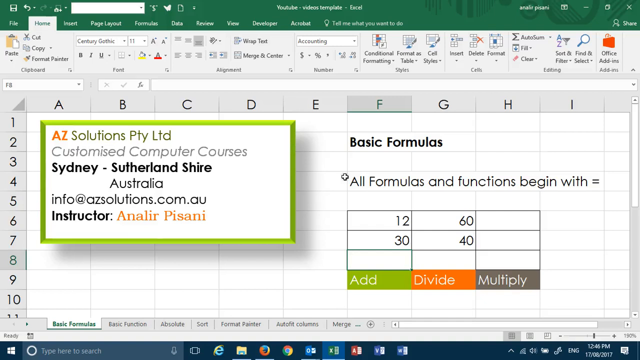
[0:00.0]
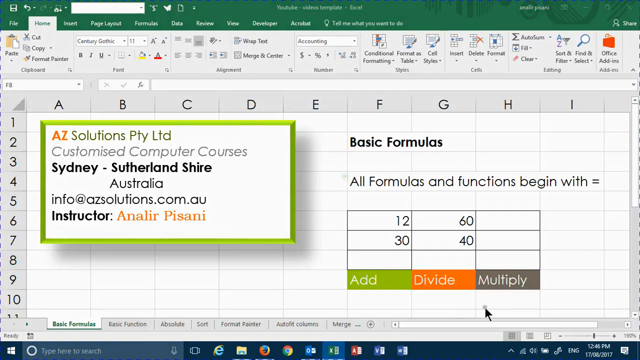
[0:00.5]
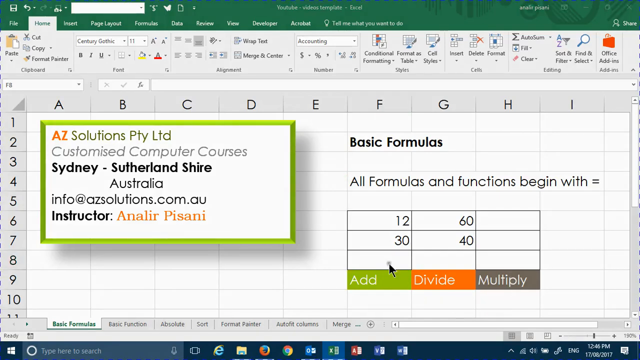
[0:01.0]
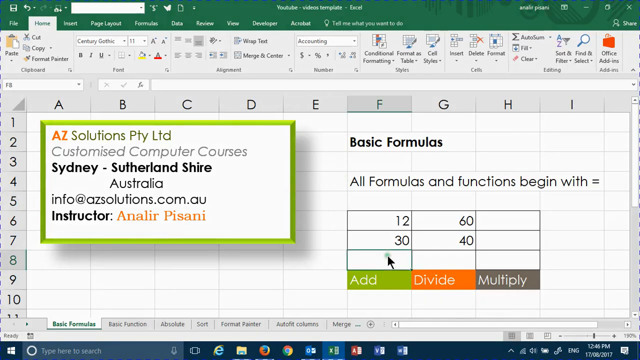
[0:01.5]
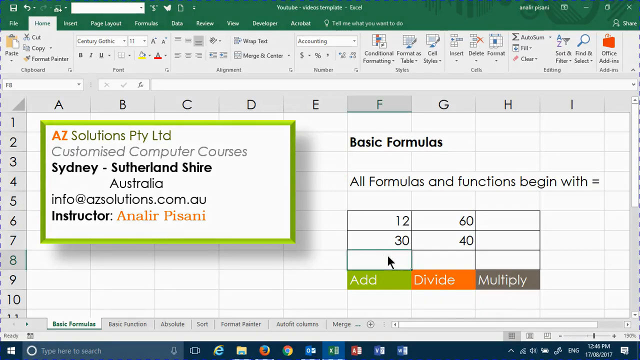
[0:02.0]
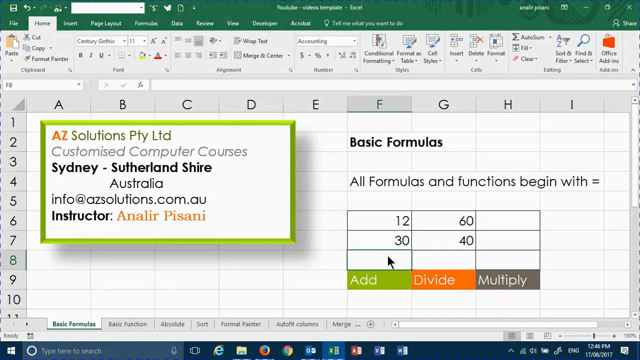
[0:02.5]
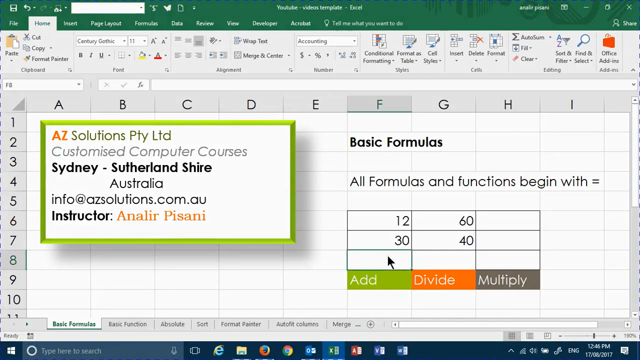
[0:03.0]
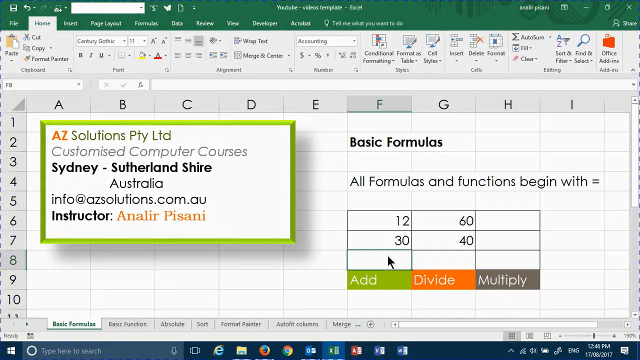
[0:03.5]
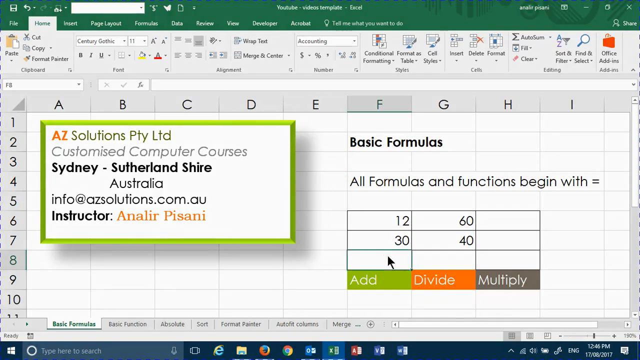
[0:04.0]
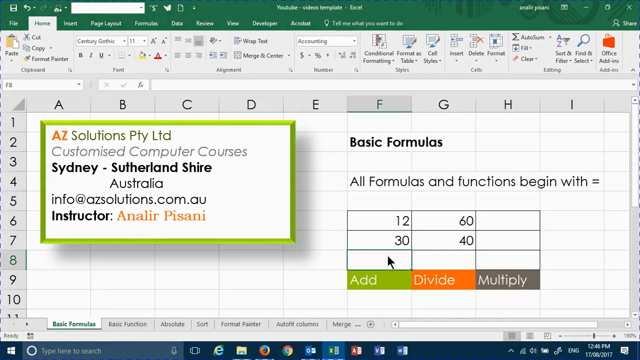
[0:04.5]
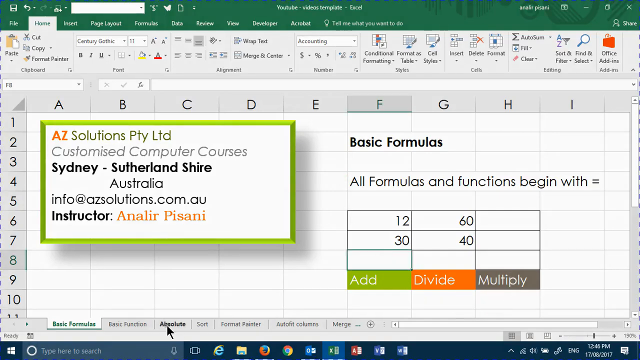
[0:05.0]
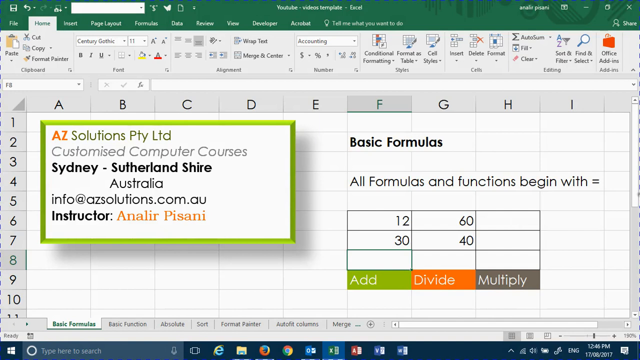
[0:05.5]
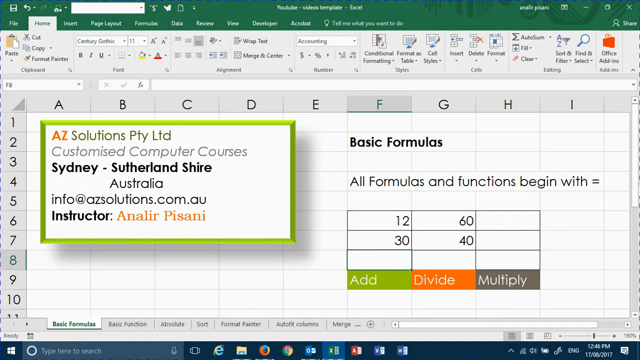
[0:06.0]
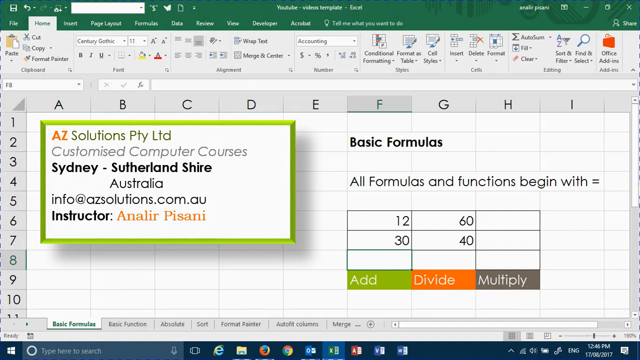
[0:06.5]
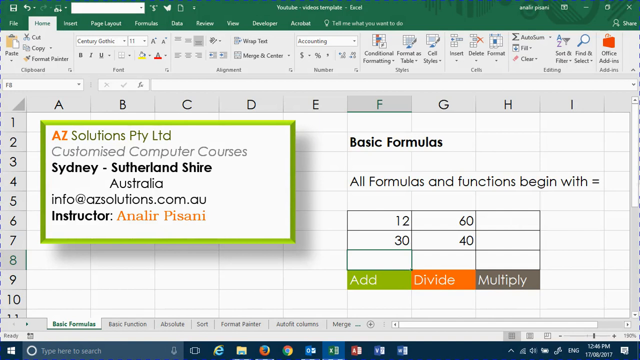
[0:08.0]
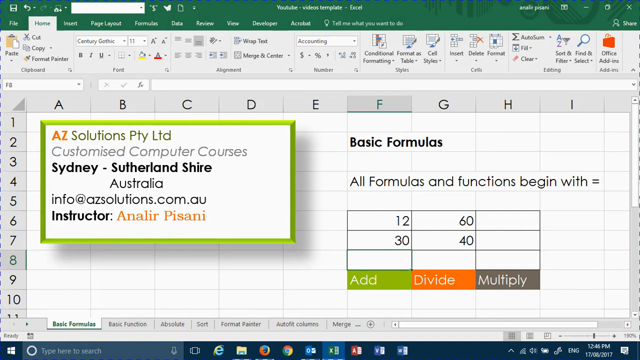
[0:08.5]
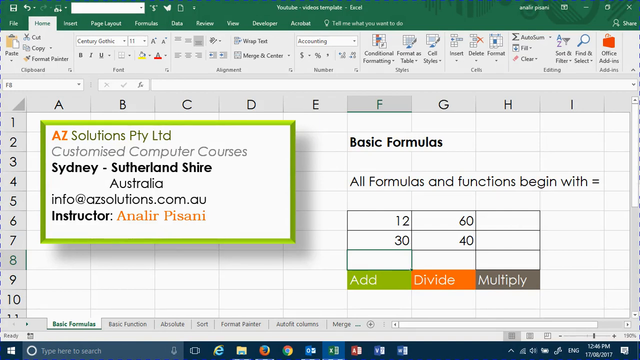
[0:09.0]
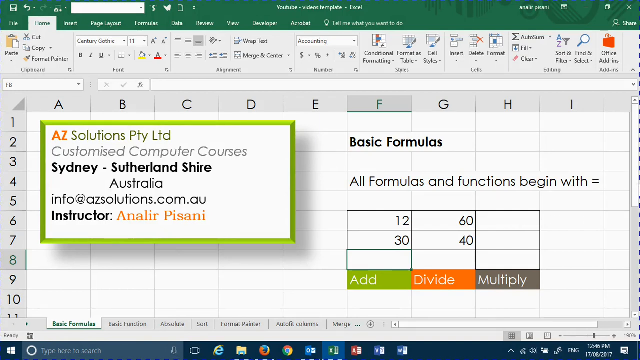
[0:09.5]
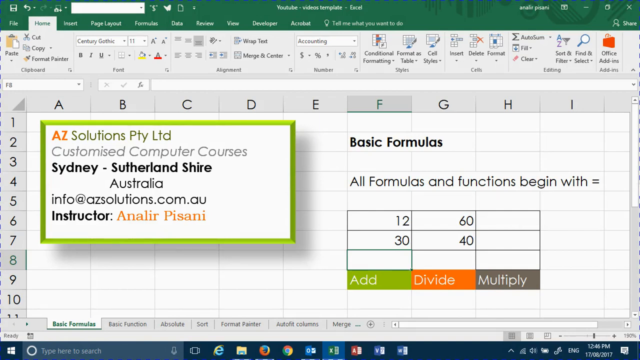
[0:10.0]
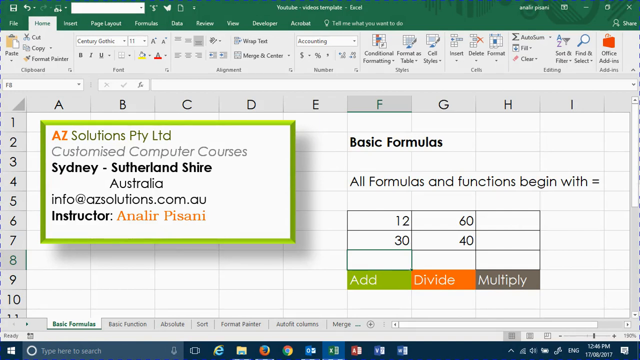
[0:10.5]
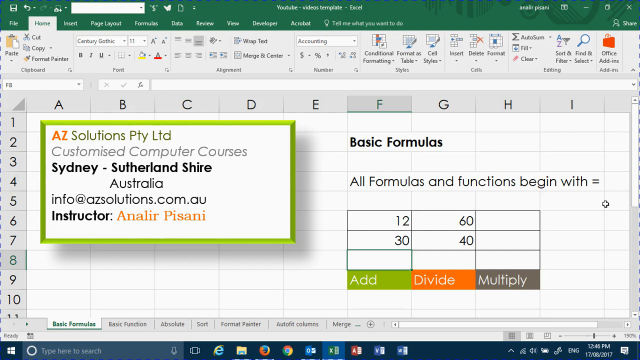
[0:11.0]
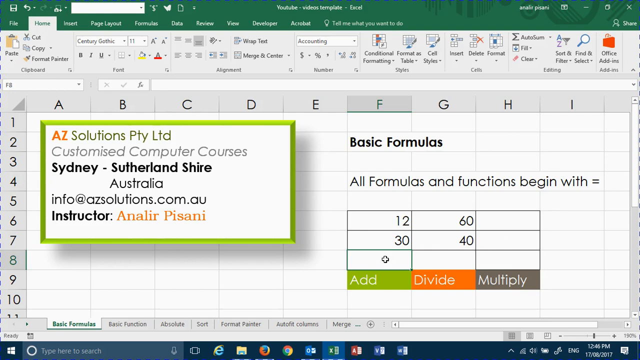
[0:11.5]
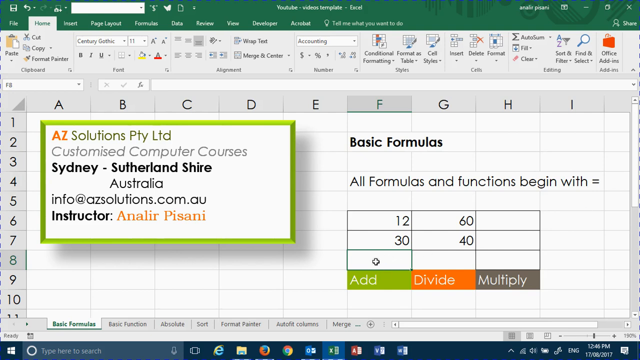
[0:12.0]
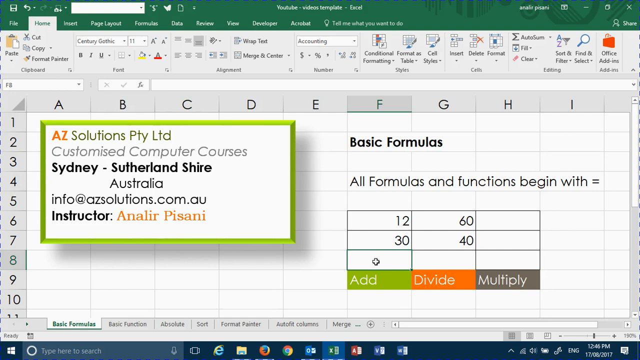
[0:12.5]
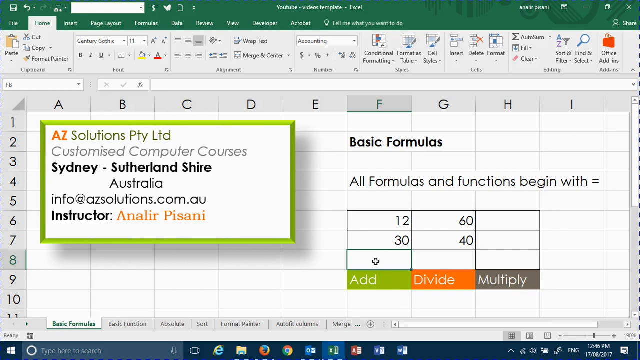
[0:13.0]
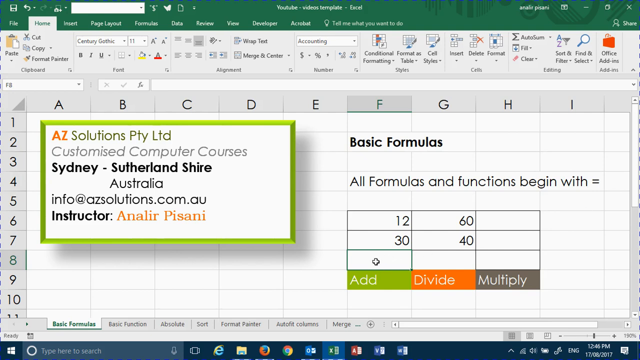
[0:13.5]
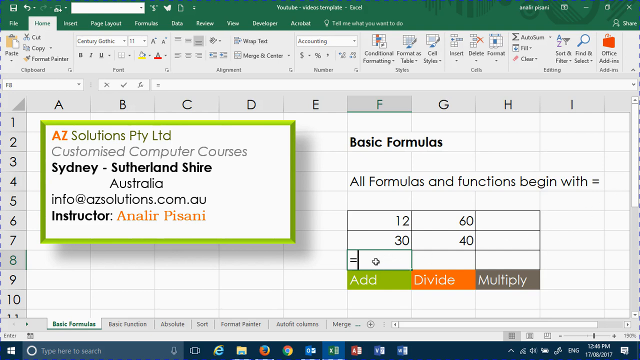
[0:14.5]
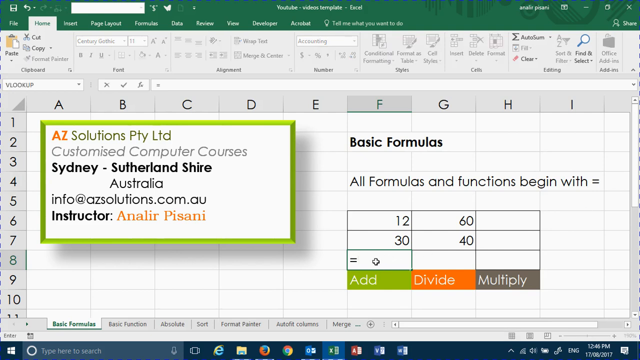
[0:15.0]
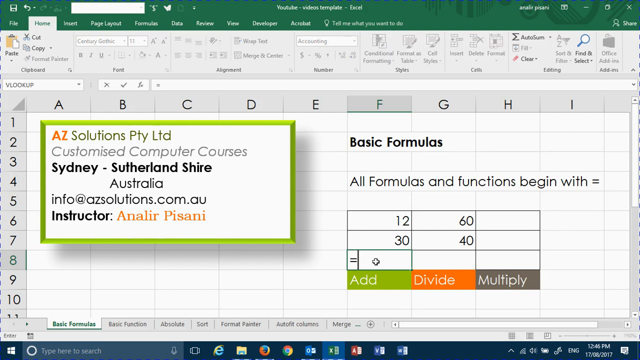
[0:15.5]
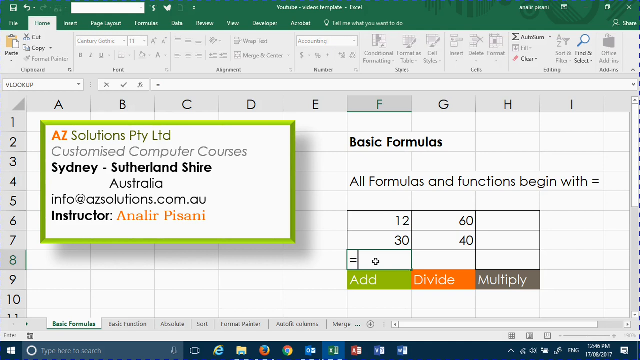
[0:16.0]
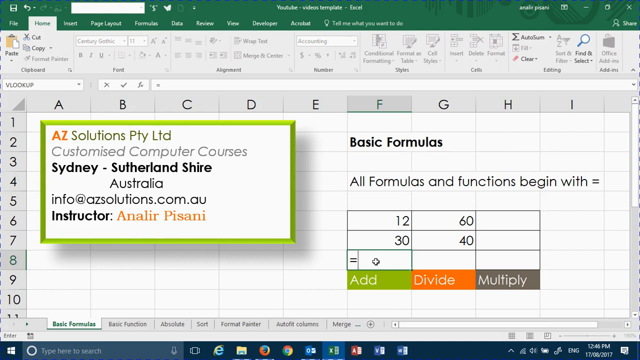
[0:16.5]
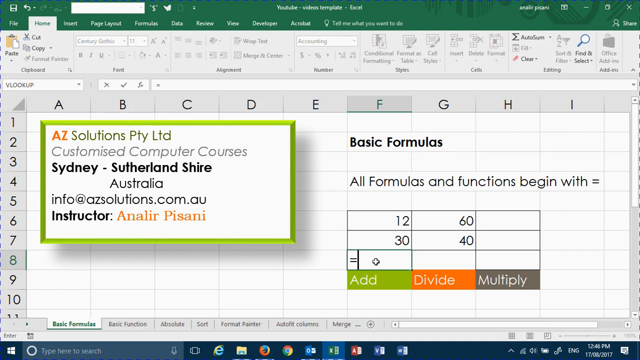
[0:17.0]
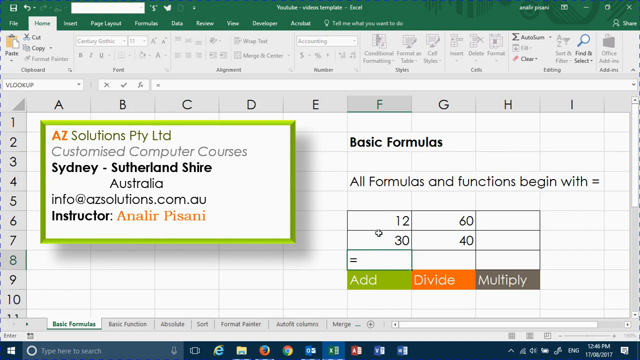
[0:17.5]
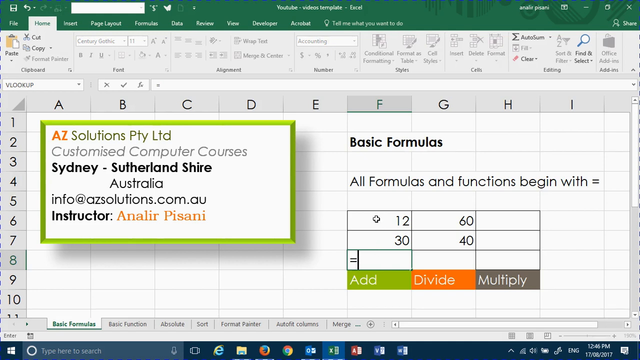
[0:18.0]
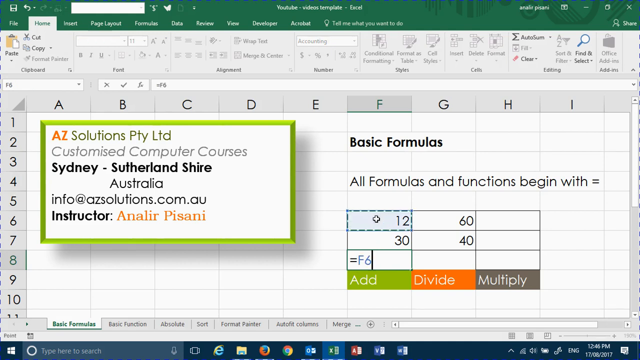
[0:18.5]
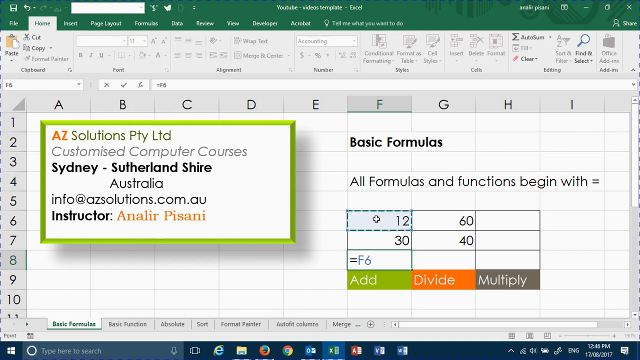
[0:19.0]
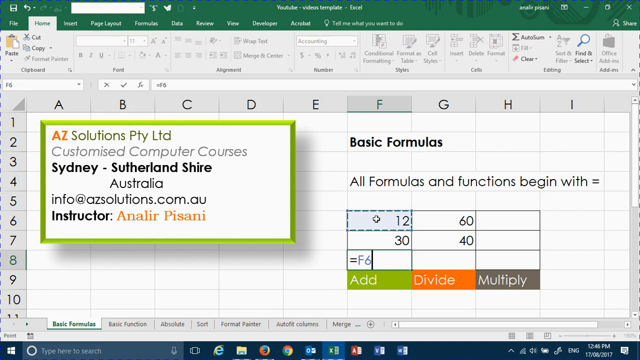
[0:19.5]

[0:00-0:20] A Microsoft Excel sheet shows what looks like a business card for a place called AZ Solutions Pty Ltd, Customized Commuter Courses, on the left-hand side, apparently the instructor's own card. On the right-hand side there are columns filled with text and rows saying "basic formulas," and below that it says "all formulas and functions begin with an equal." There also appears to be a table labeled "add," "divide," and "multiply." An equal sign is entered in the empty bottom row of the add section, and then the top cell, which says 12, is clicked, so the 12 is pulled into the formula.